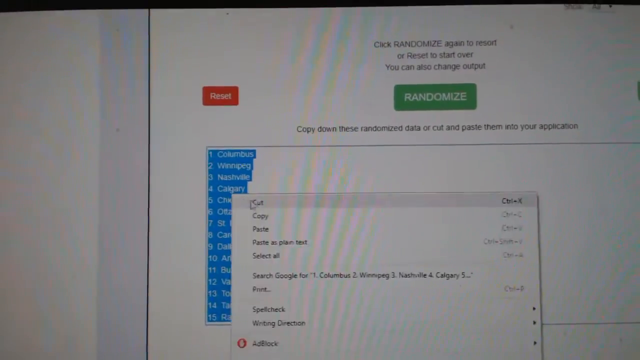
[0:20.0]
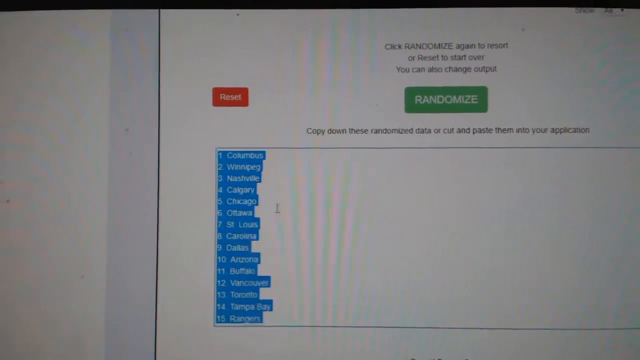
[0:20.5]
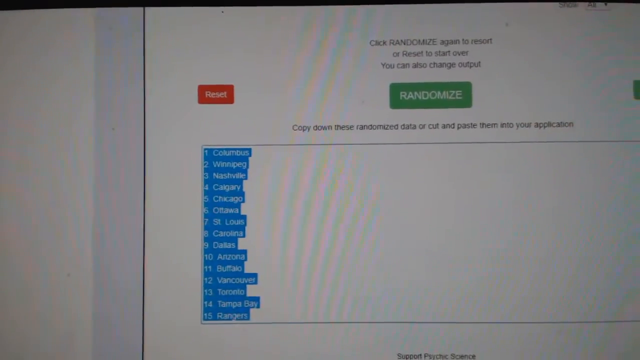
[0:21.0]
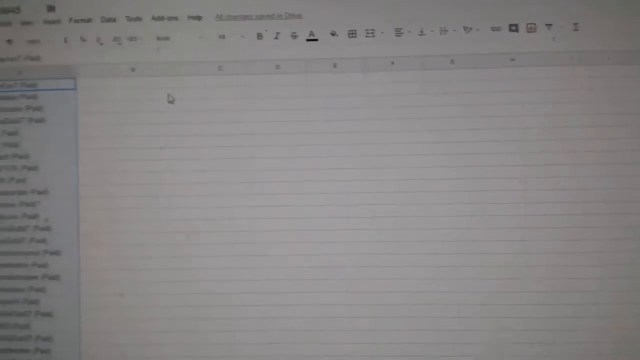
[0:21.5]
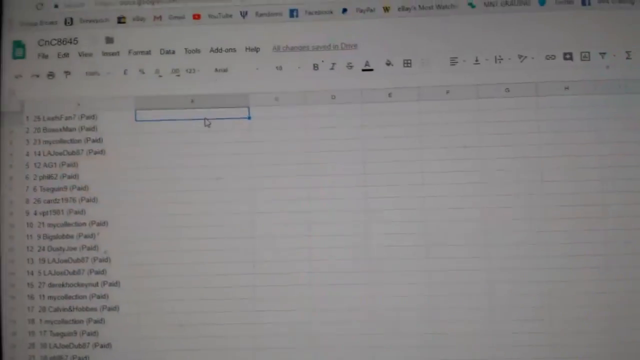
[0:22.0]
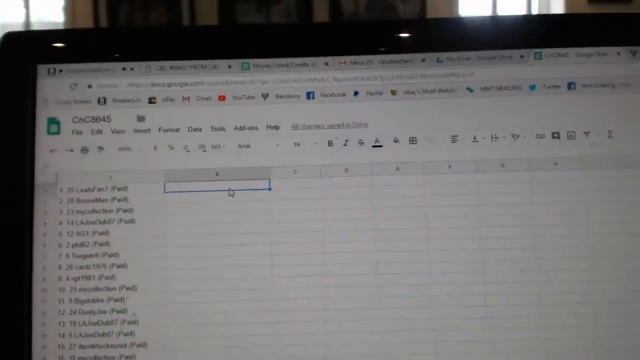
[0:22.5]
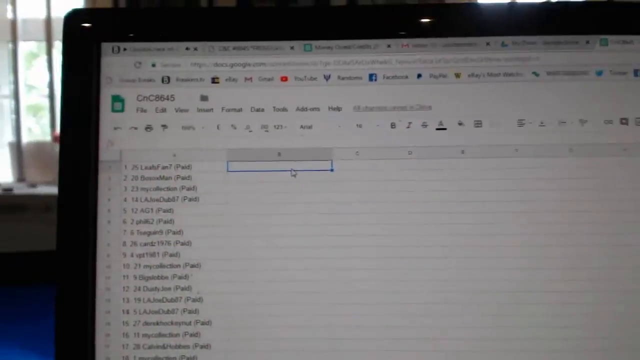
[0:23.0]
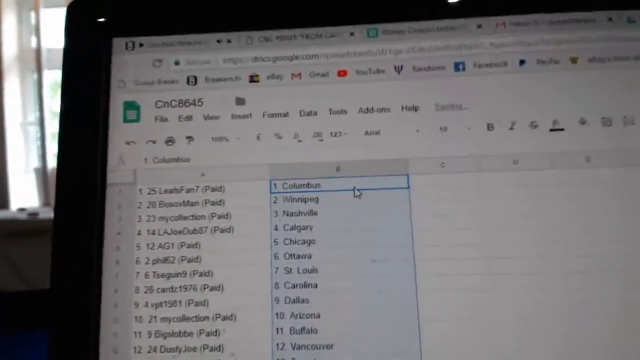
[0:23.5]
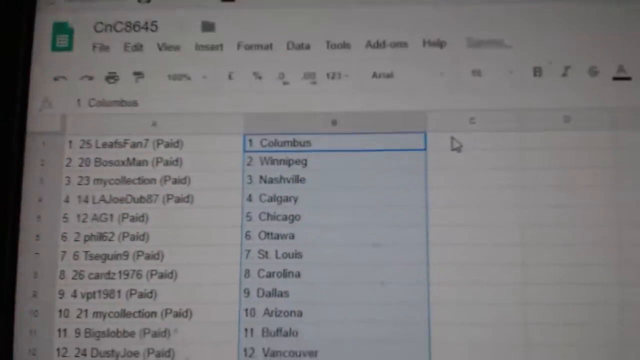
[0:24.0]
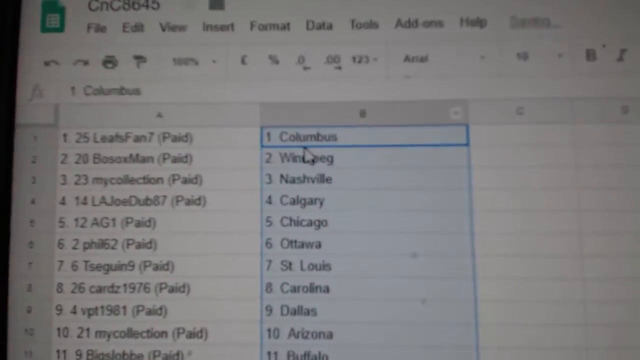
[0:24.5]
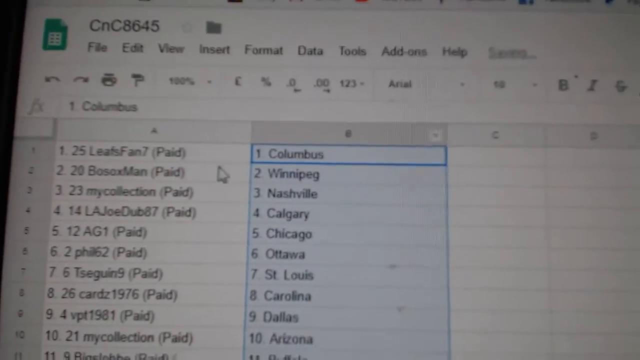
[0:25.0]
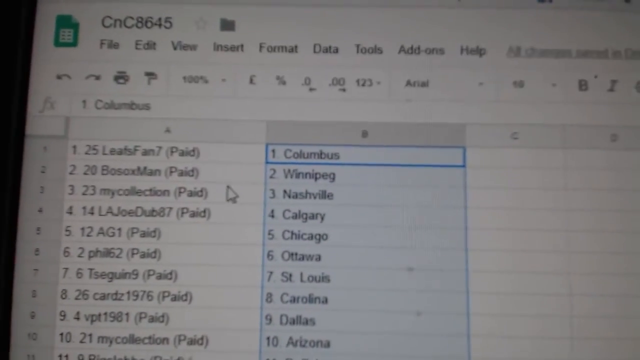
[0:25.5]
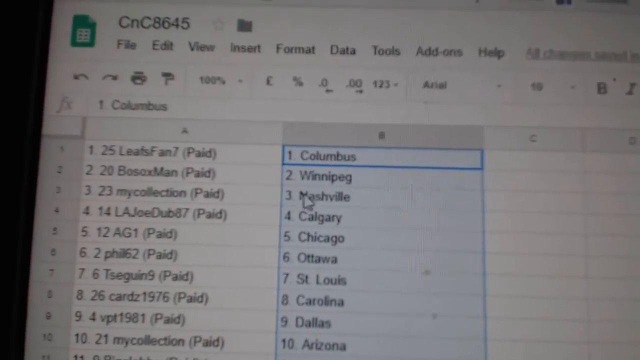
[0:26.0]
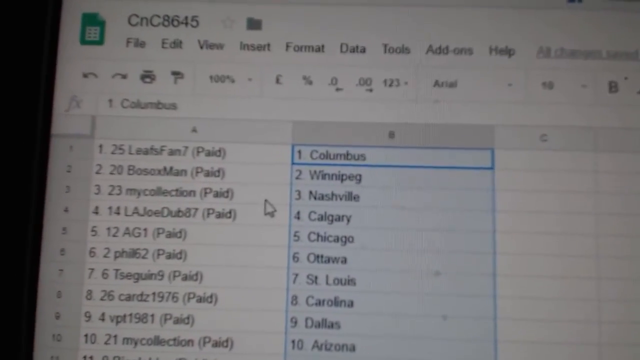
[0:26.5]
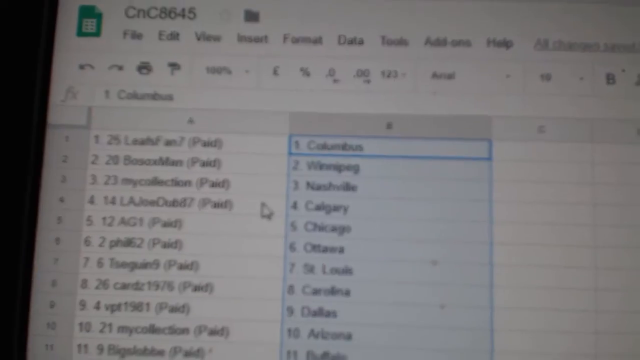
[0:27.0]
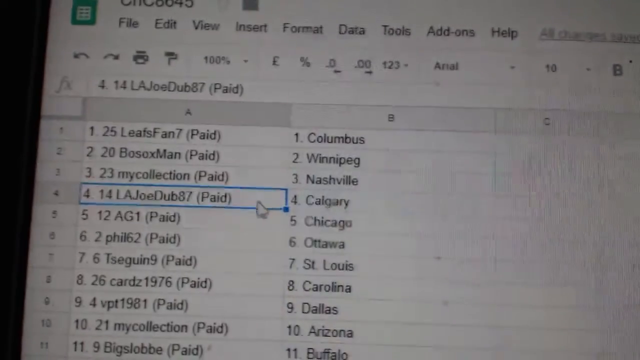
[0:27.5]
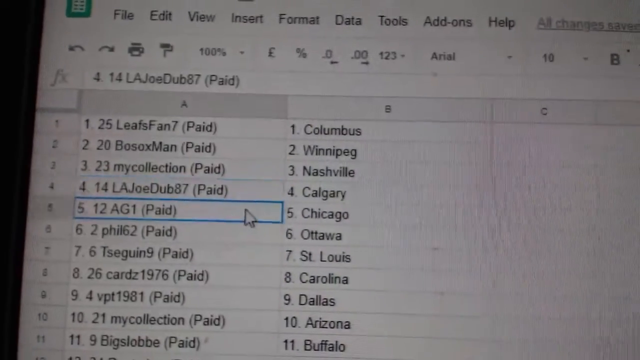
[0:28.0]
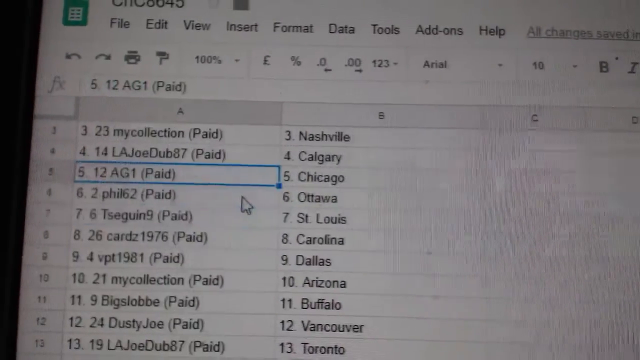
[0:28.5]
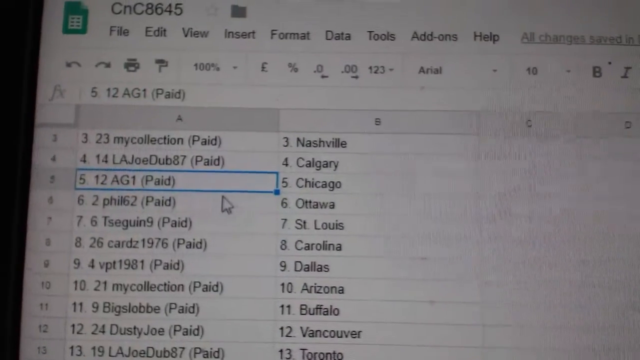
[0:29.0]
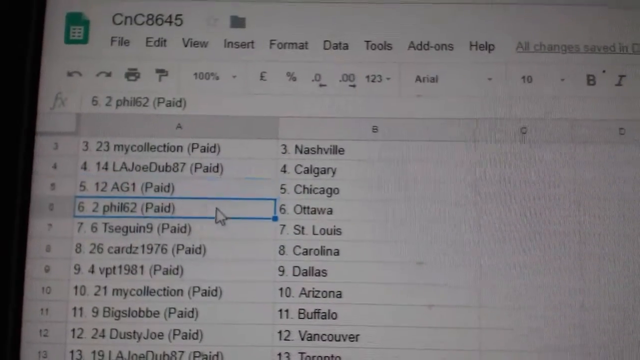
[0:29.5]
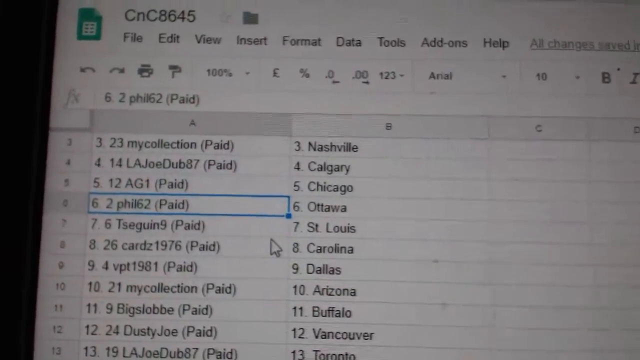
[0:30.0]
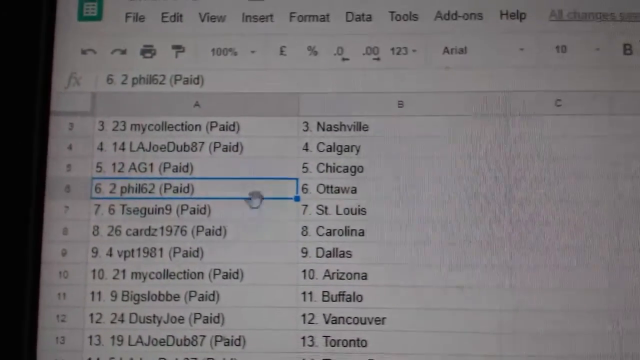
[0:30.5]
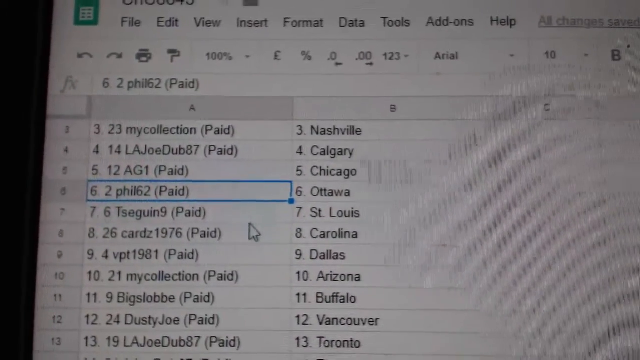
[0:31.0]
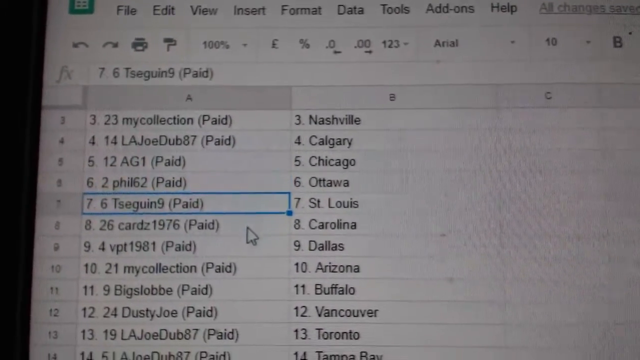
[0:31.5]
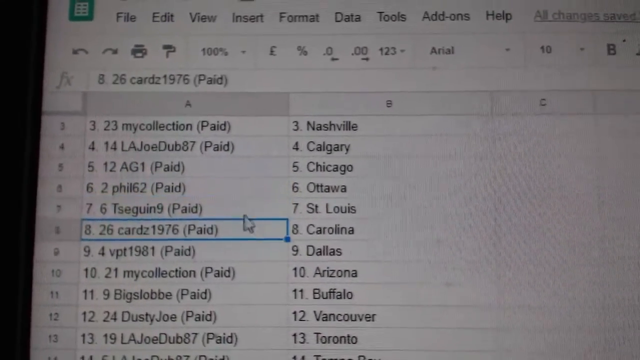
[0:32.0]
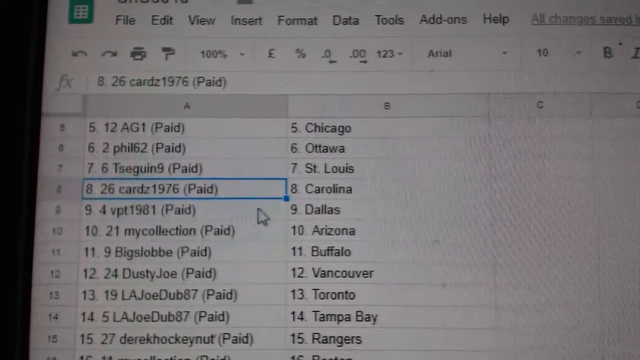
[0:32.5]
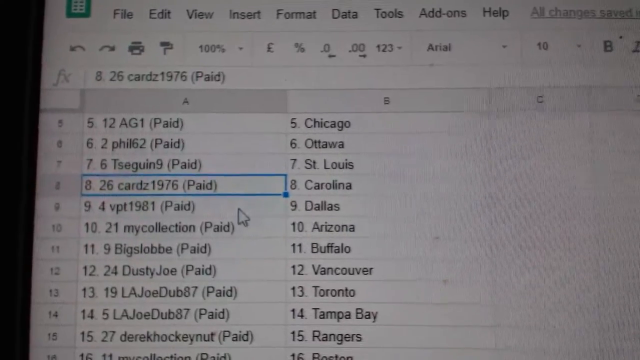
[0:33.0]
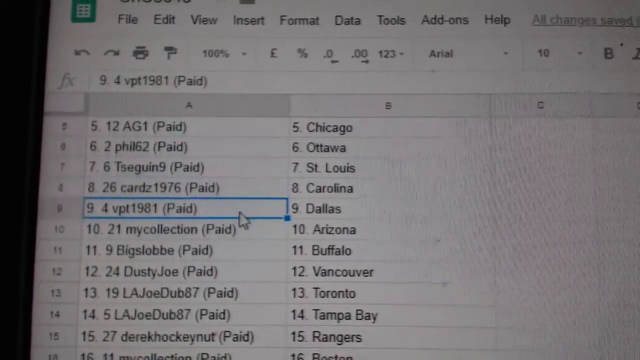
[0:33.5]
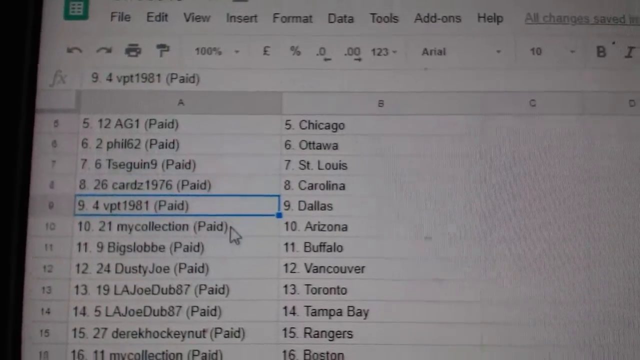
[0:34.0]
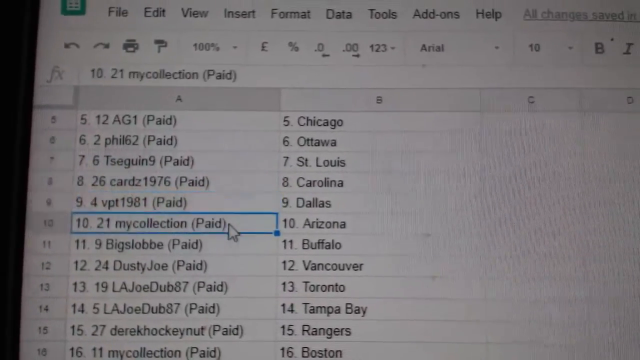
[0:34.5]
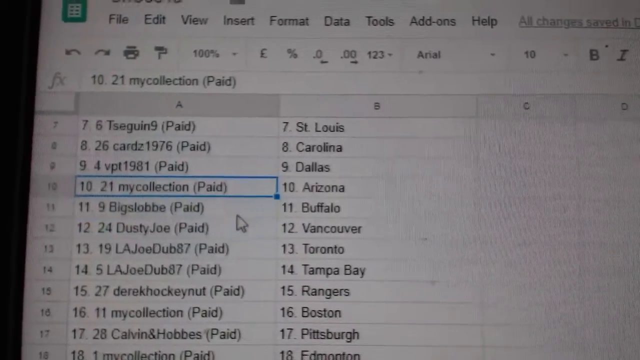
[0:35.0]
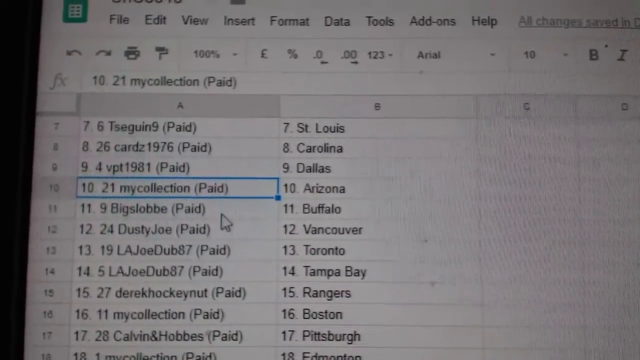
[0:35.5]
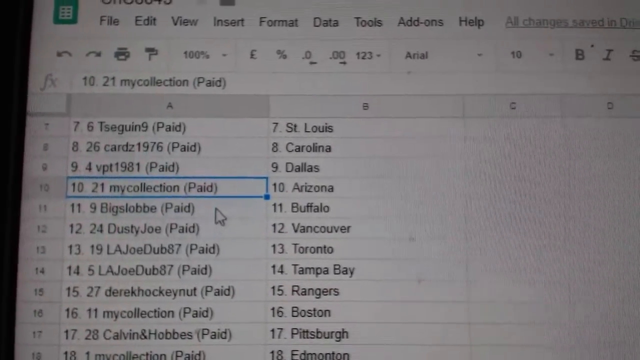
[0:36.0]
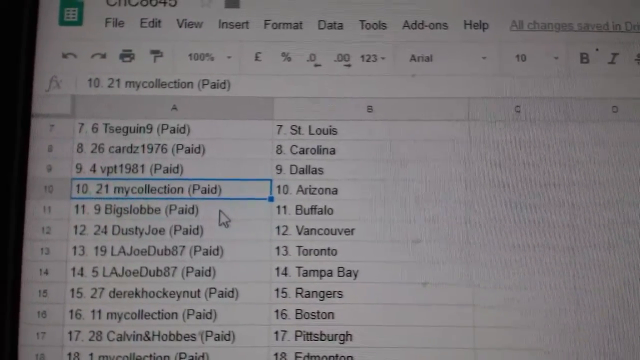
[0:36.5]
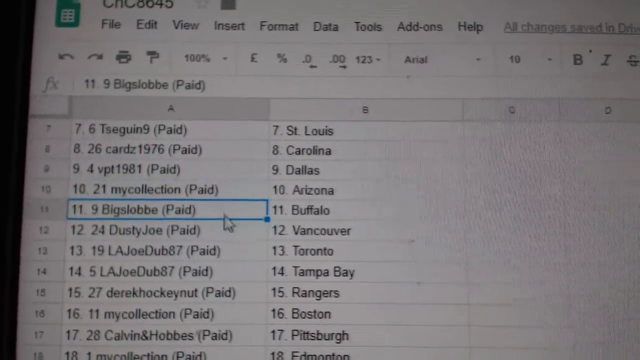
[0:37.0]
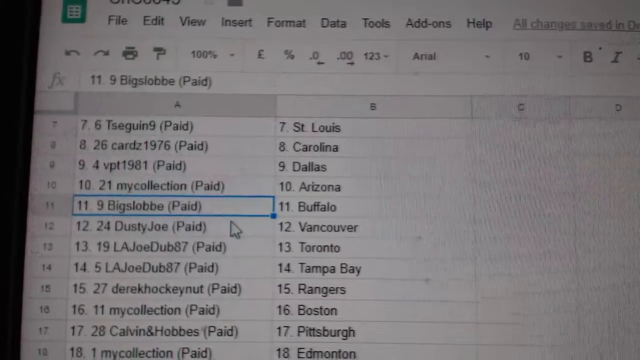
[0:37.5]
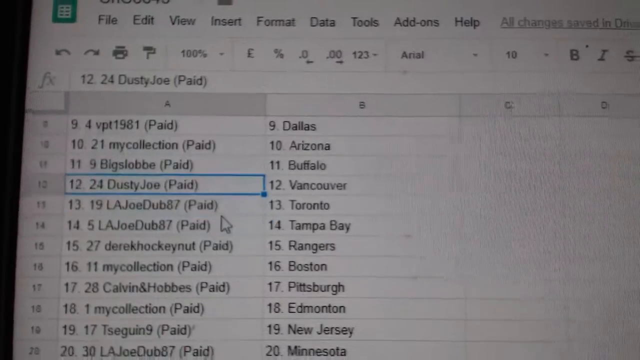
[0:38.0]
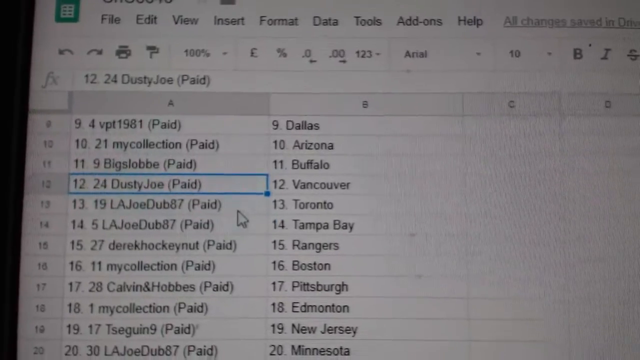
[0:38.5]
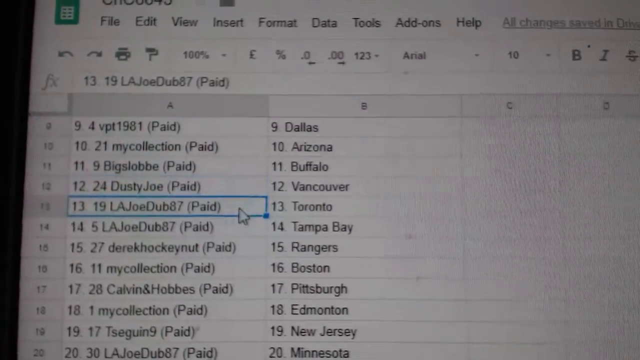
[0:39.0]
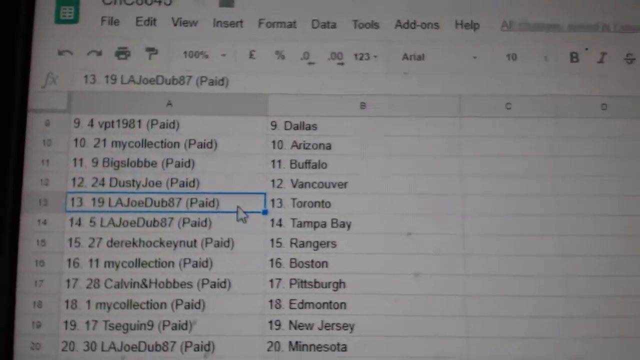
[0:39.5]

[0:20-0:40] The person shows their laptop, and a little of the window is visible in the back. The spreadsheet entries include Nashville, AGI, St. Louis, Ottawa, 4VPT, paid and billable, and they click on different things in Excel. The setting looks like it might be an office. There is Columbus with 12 AGI paid, as well as Buffalo, Vancouver, and Toronto as number 13. Numbers on the left match numbers on the right. It looks like a fairly large database, with entries such as 12, 24, Dusty Joe paid, so it is perhaps some kind of billing. The camera is quite shaky. He seems to focus on the left side, highlighting things, which show up in a blue square.